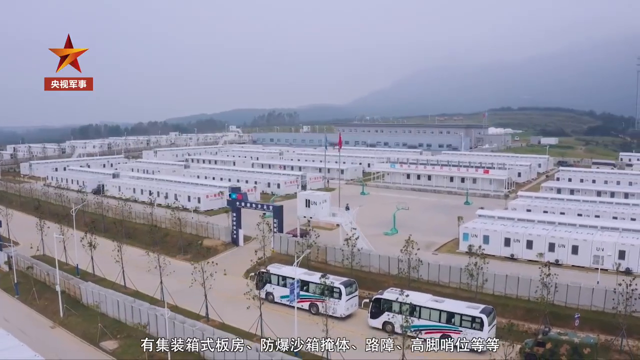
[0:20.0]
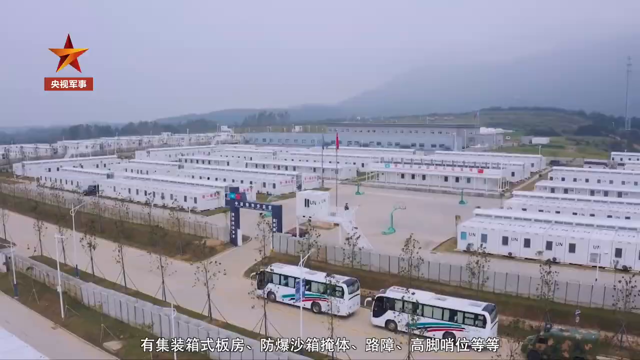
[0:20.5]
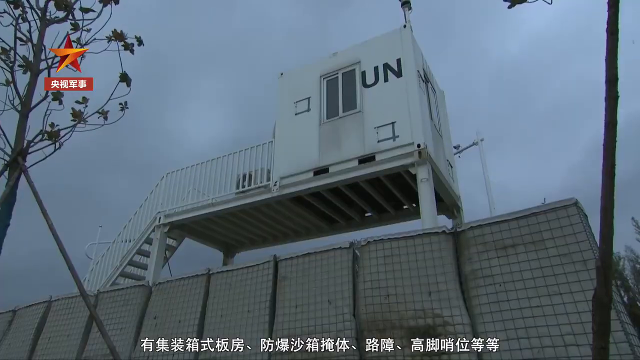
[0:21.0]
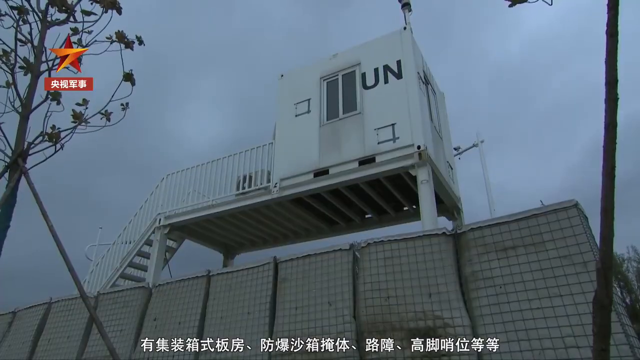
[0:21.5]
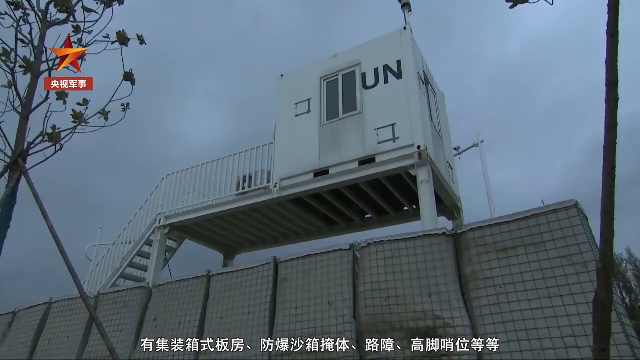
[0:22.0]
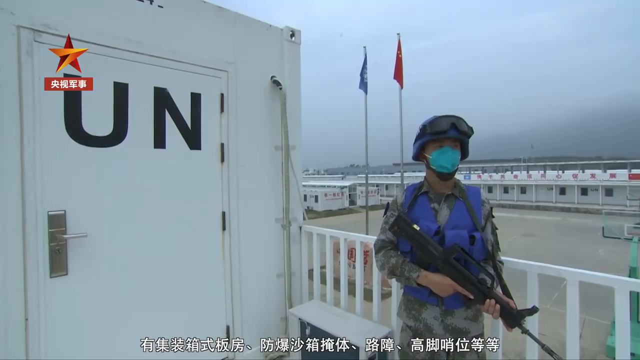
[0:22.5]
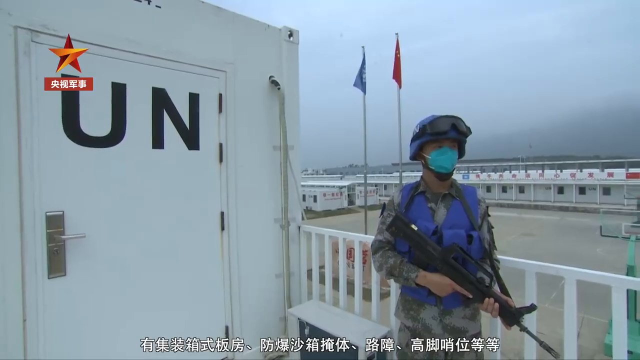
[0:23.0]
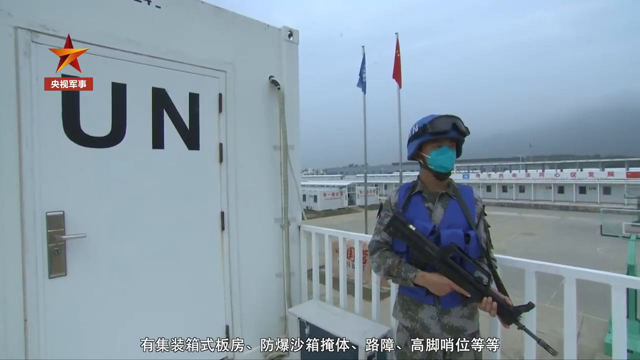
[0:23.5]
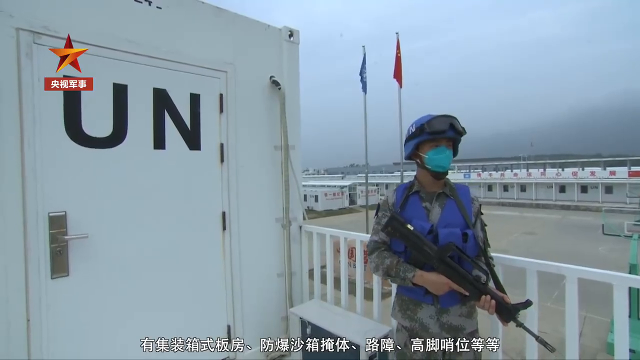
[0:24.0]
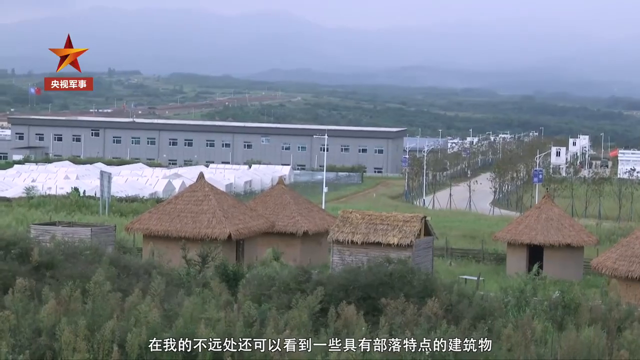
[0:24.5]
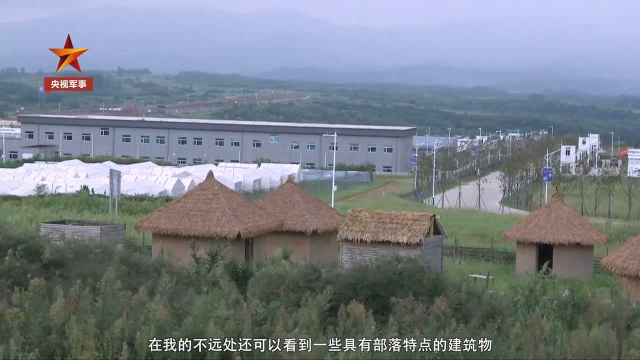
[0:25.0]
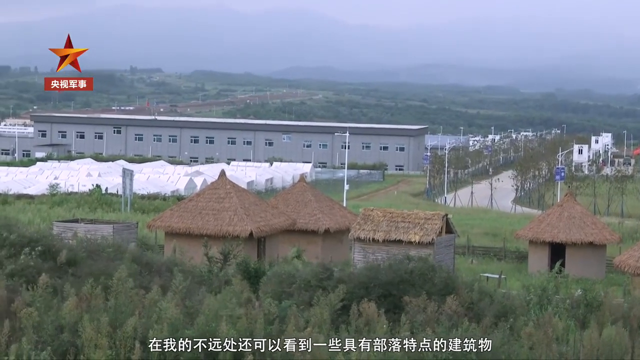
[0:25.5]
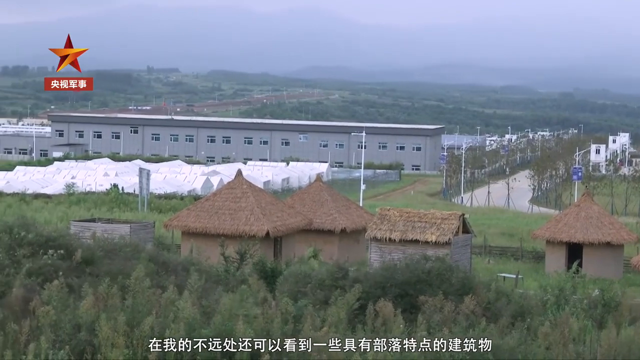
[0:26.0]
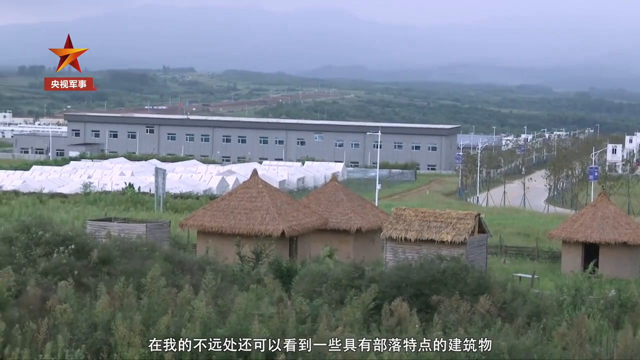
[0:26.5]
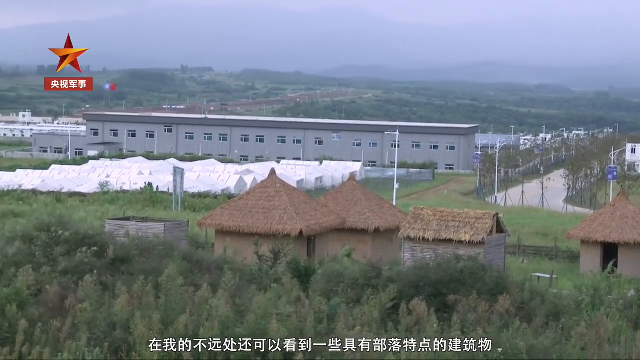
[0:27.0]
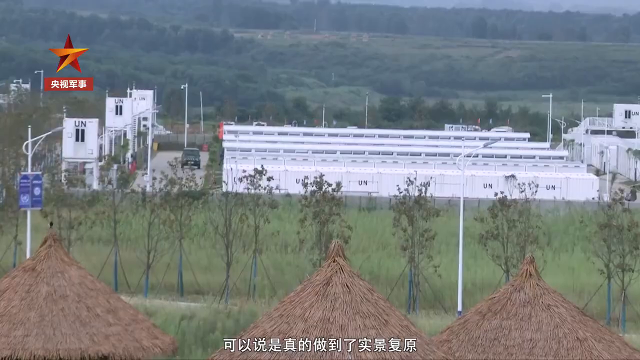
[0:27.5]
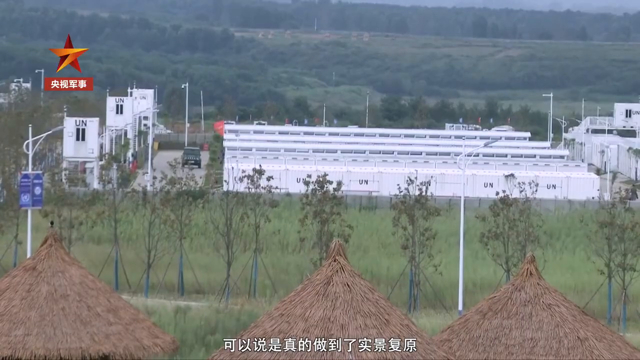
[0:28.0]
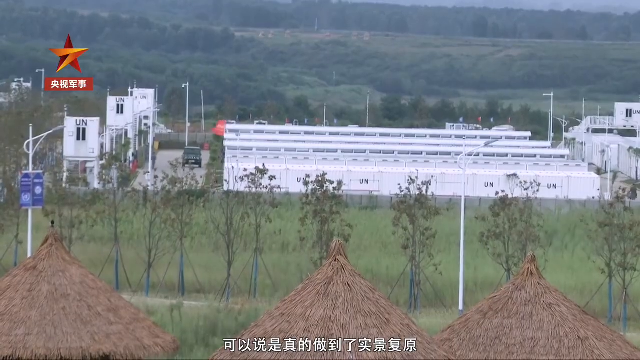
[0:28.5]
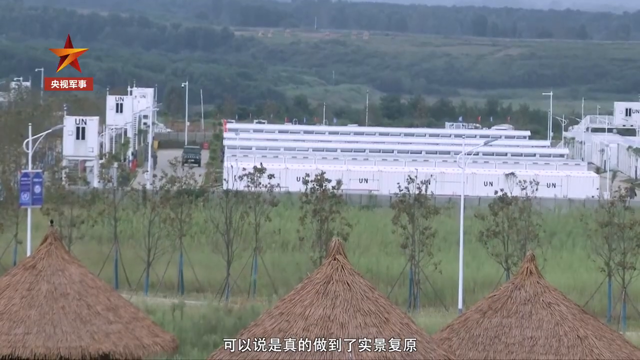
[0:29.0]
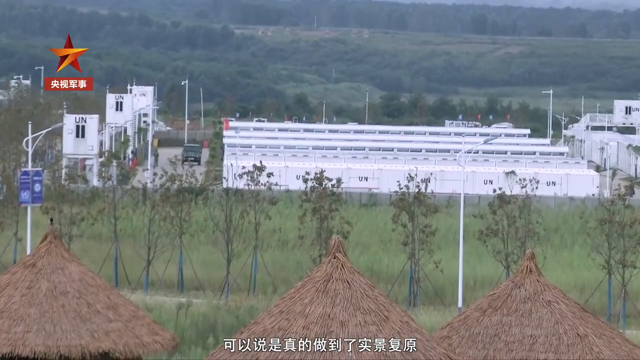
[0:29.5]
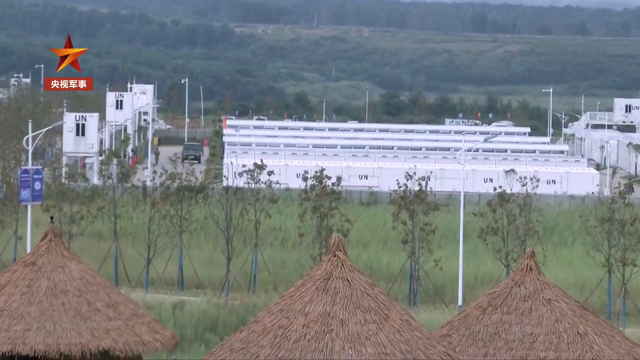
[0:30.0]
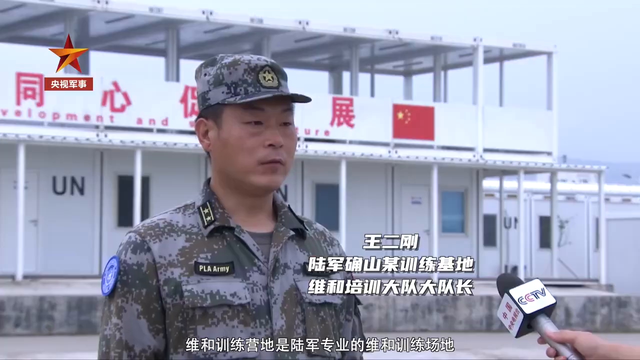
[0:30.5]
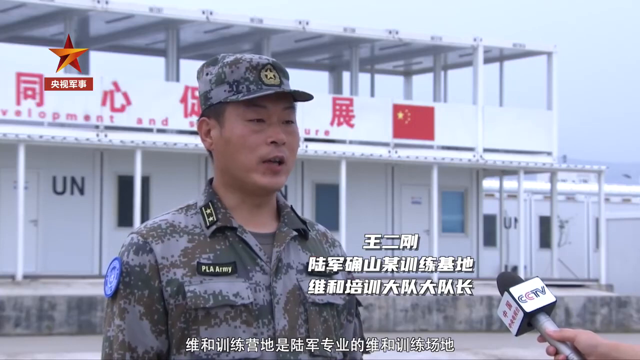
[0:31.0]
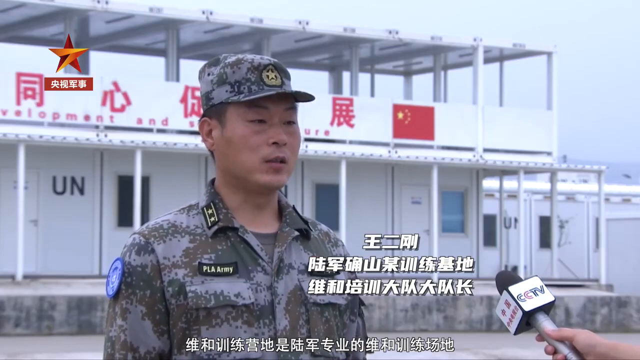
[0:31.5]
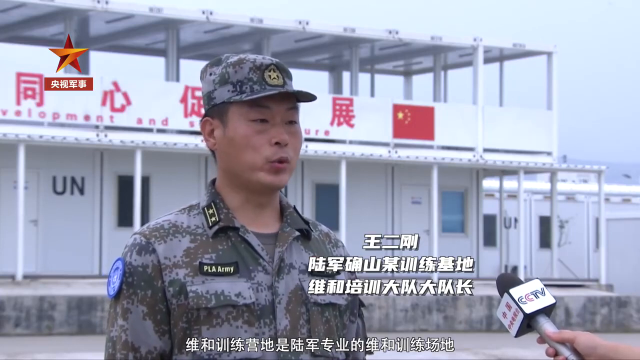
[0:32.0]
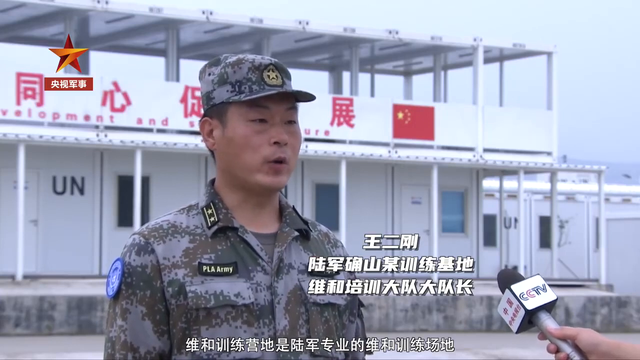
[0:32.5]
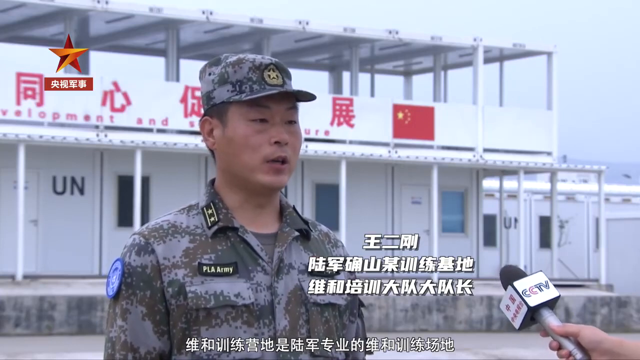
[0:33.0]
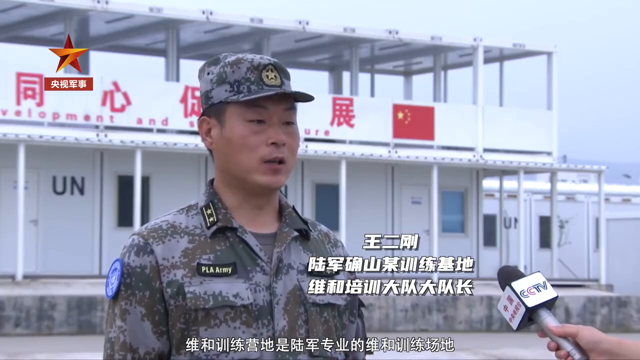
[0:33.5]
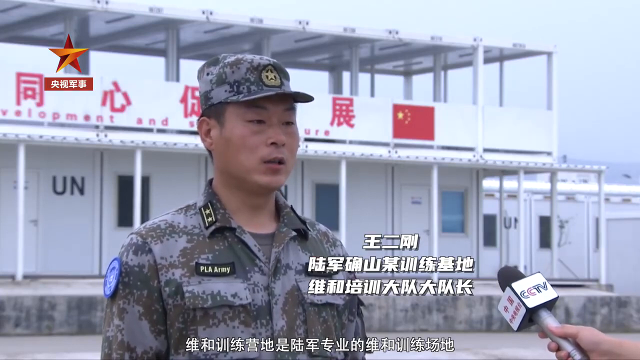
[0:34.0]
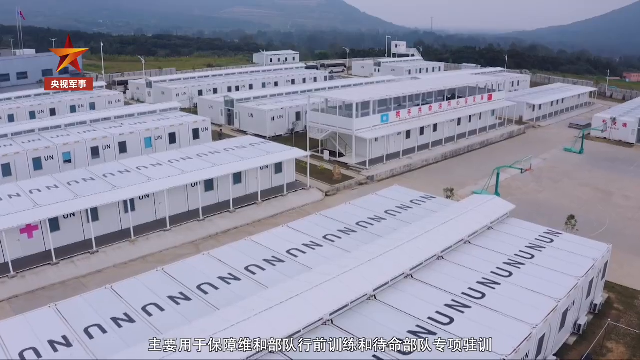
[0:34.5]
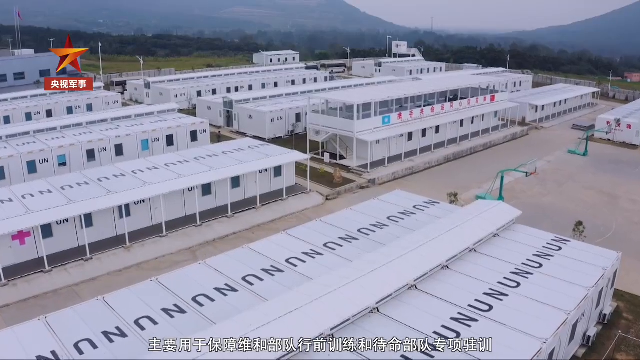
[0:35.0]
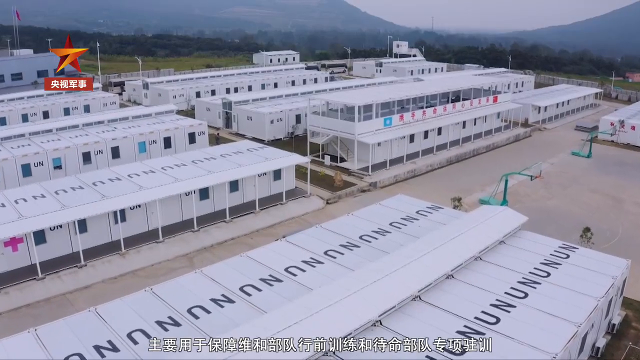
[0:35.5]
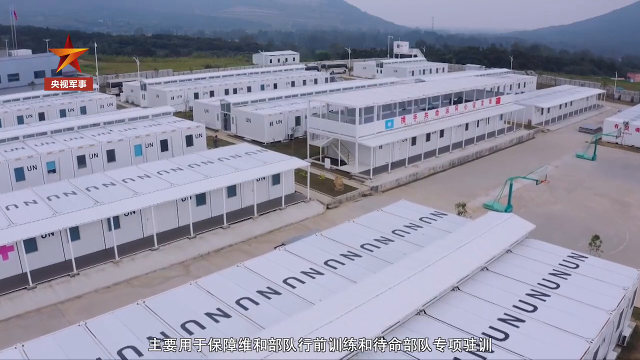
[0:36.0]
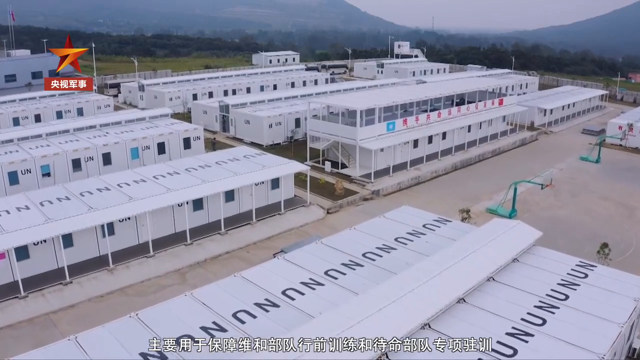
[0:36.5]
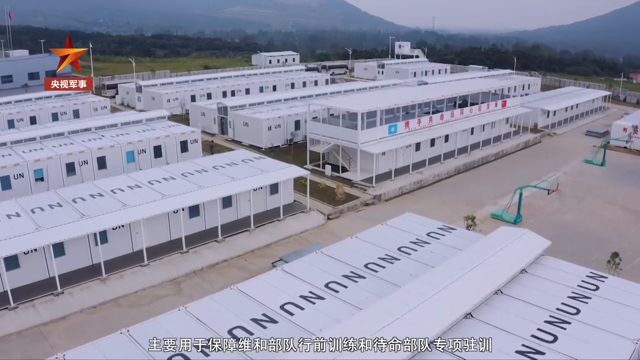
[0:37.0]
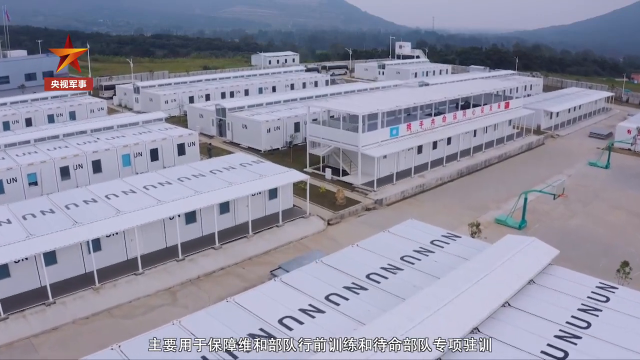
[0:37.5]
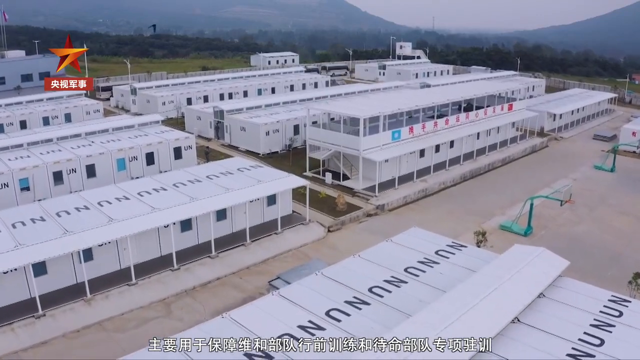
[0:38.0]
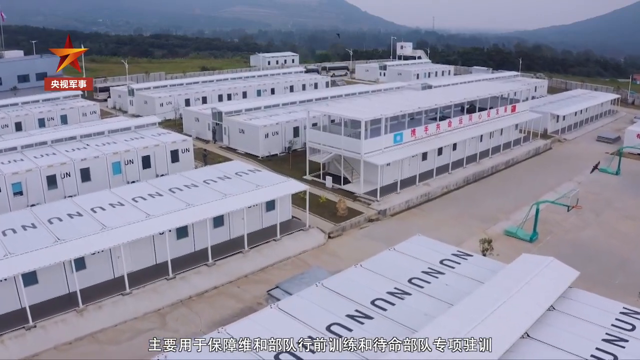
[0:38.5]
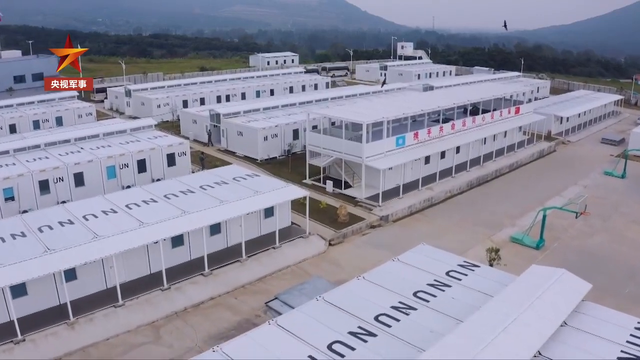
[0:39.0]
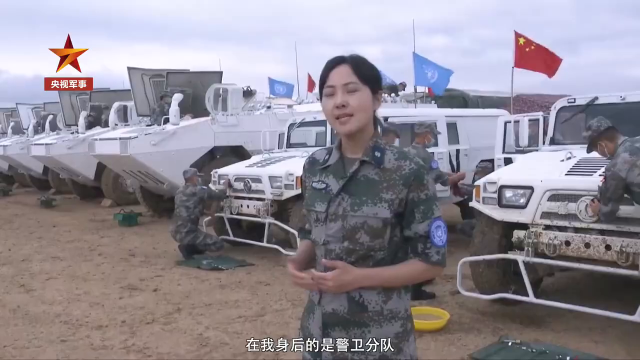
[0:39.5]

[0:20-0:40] Drone footage shows a facility that looks as if it is built in the middle of nowhere. The sky is quite hazy, but the outline of a mountain seems visible in the distance. The facility has a perimeter fence, and two coaches are parked outside the main entrance. The image changes to some sort of lookout tower with a small room built on top. A guard wears an army hat, an army outfit and a blue face mask, with a huge rifle over their neck and their right hand on the trigger. A pair of goggles rests on top of their helmet, and they seem to be surveying the area. The camera pans across the facility, where there are some grey buildings that look like they could be houses.